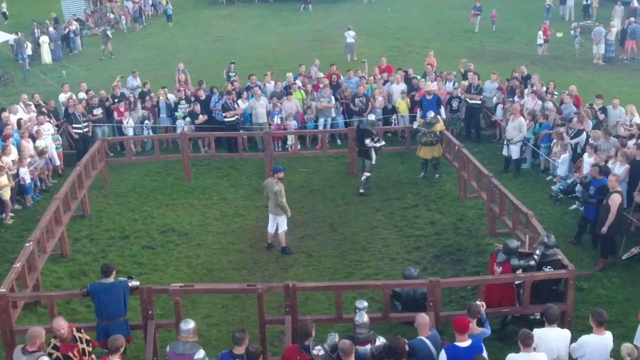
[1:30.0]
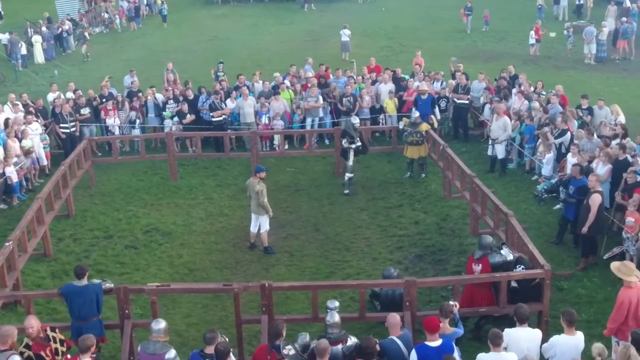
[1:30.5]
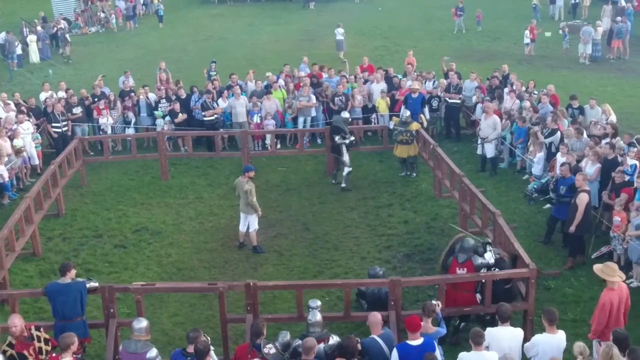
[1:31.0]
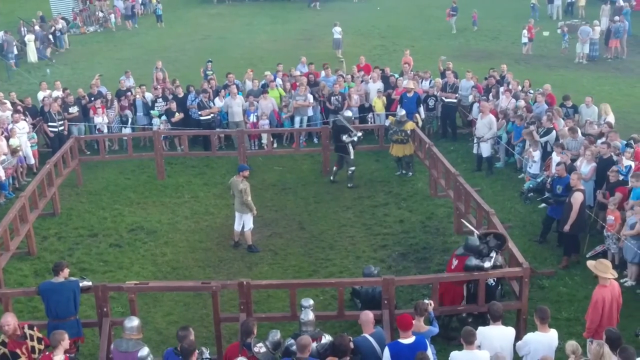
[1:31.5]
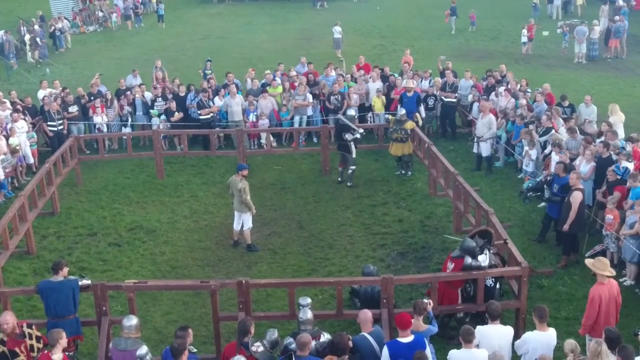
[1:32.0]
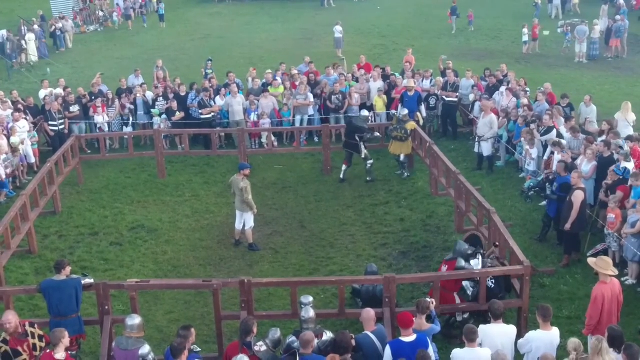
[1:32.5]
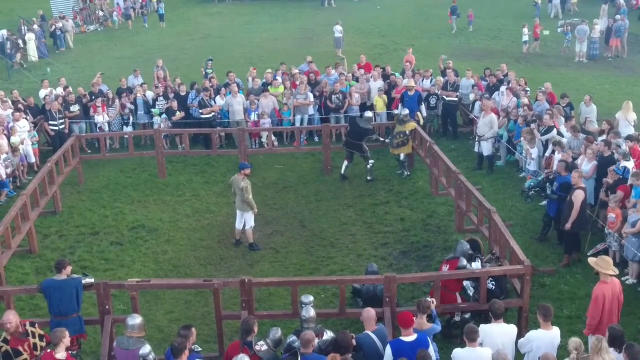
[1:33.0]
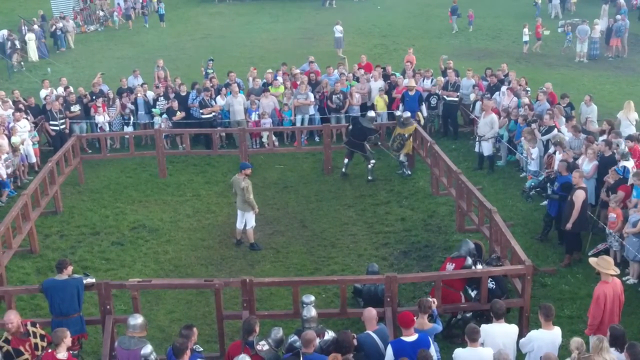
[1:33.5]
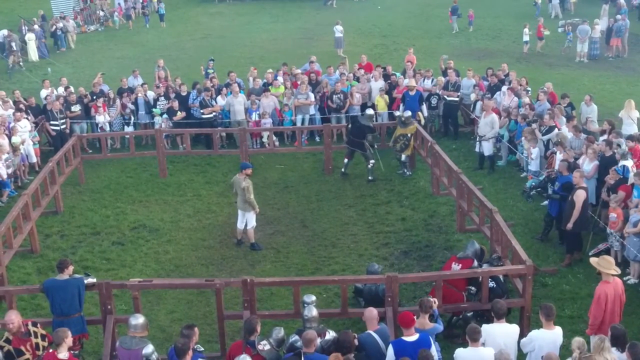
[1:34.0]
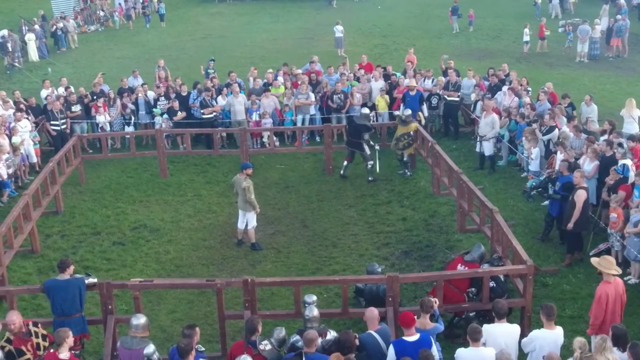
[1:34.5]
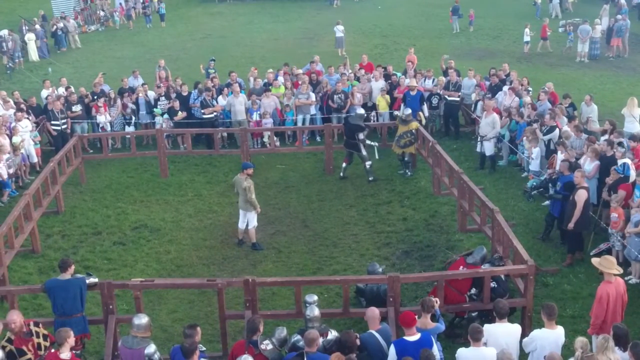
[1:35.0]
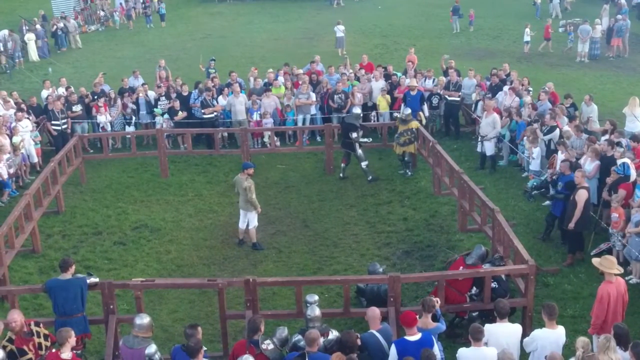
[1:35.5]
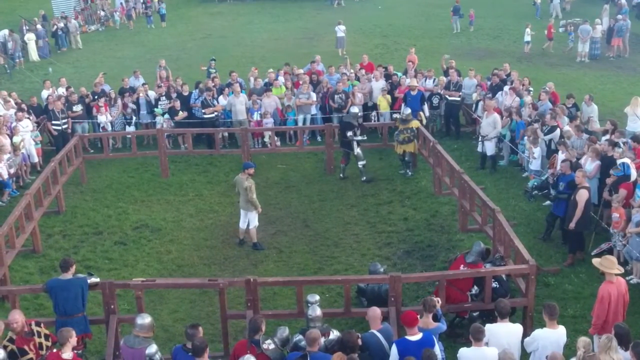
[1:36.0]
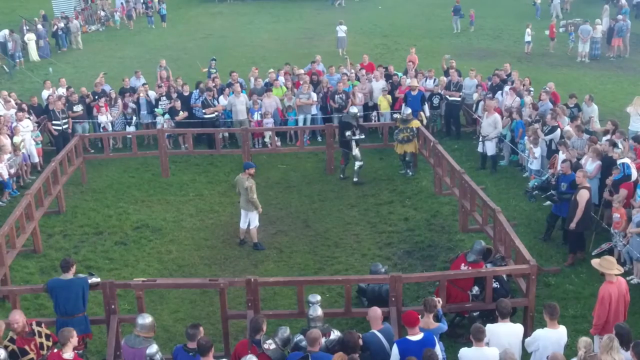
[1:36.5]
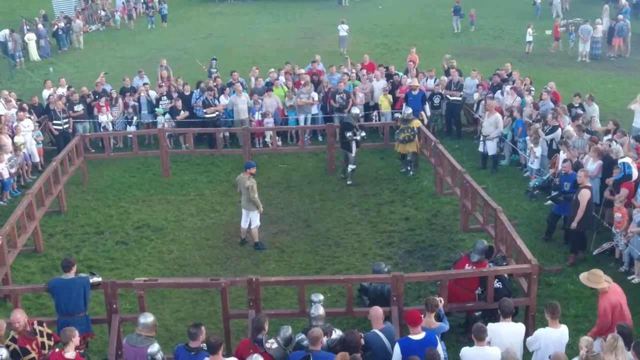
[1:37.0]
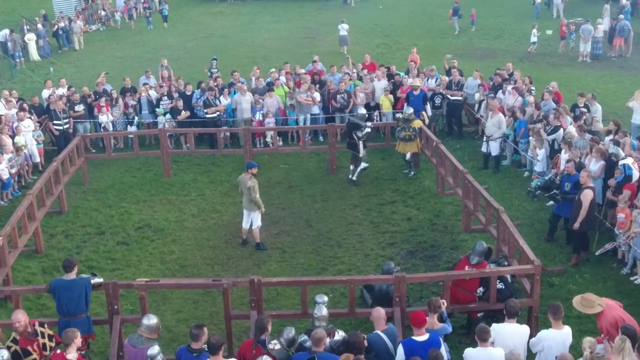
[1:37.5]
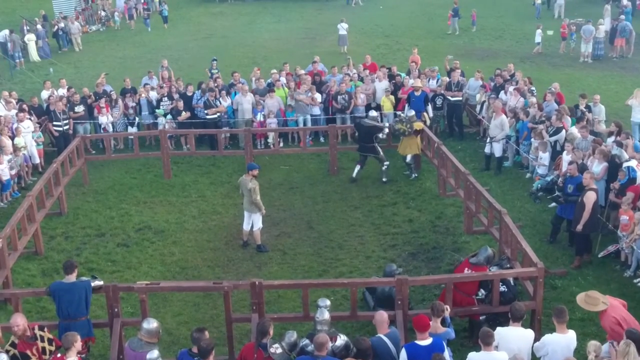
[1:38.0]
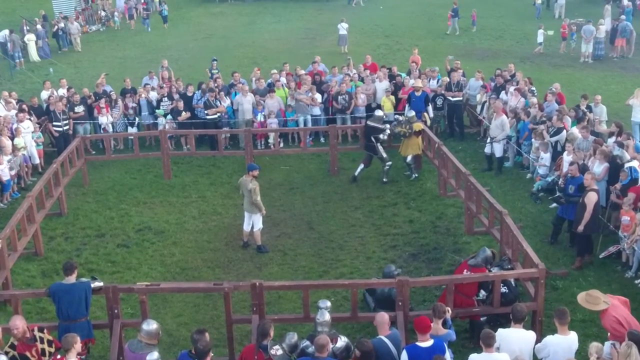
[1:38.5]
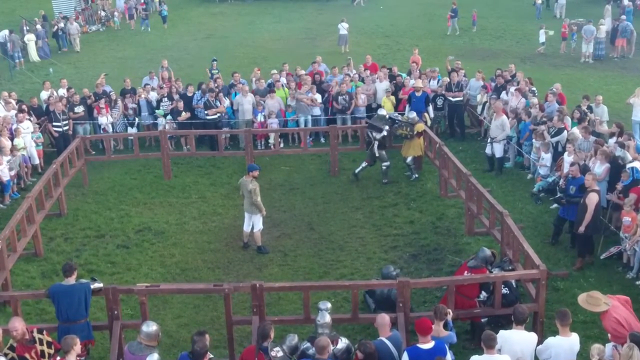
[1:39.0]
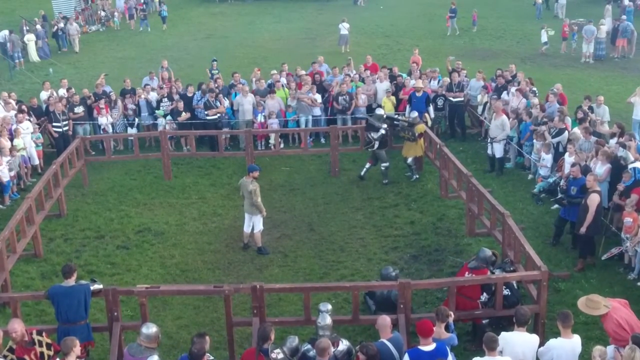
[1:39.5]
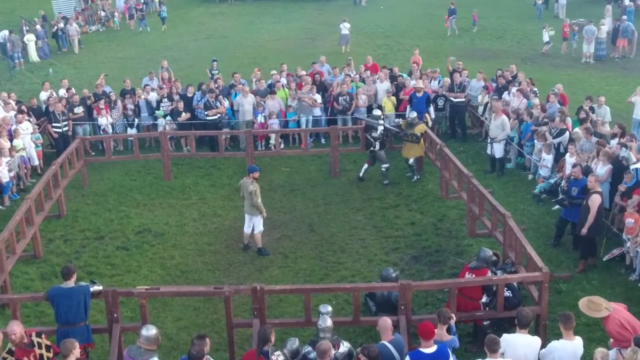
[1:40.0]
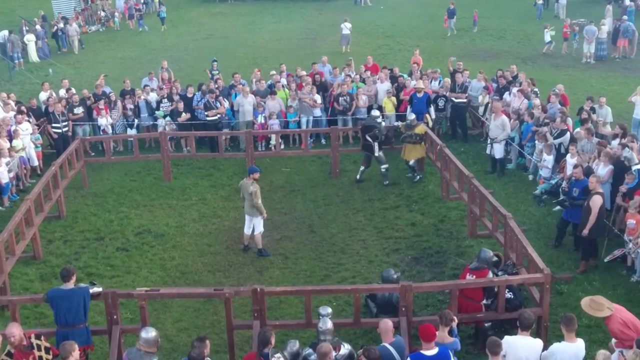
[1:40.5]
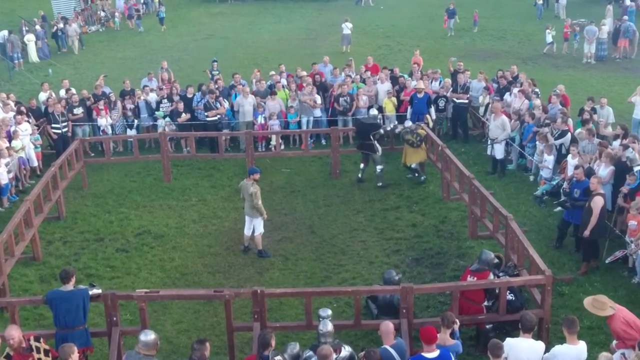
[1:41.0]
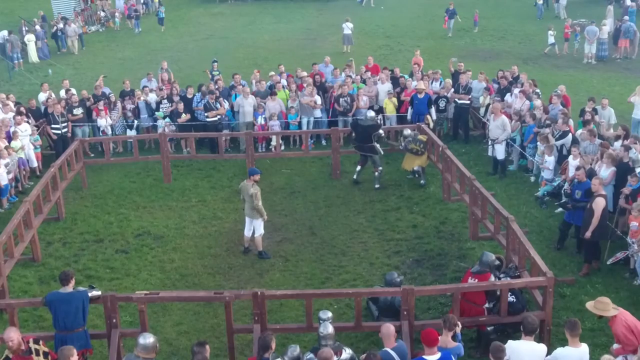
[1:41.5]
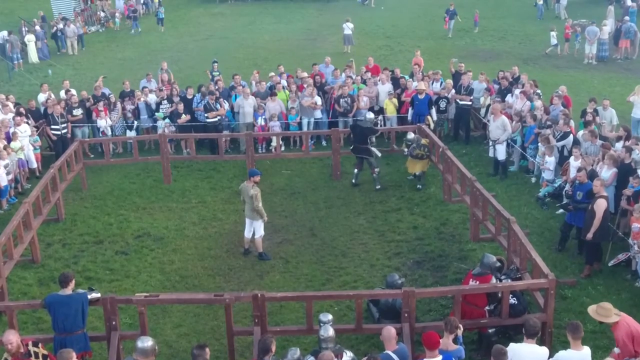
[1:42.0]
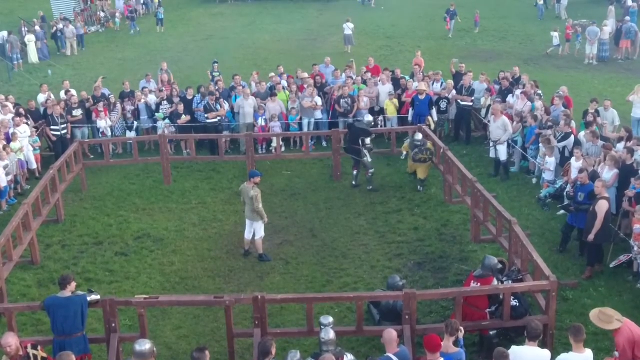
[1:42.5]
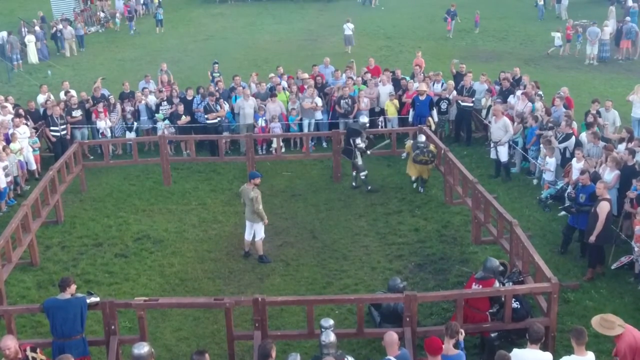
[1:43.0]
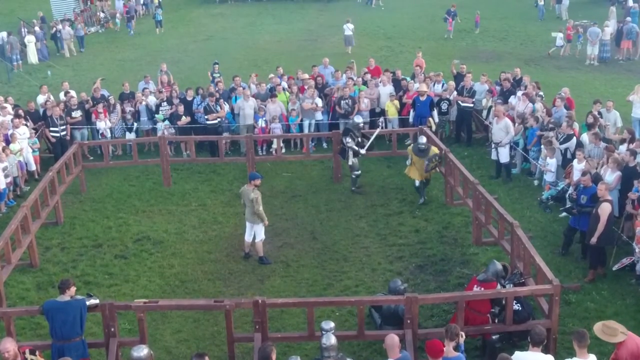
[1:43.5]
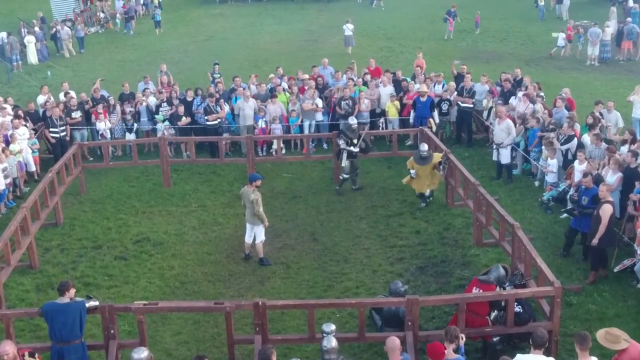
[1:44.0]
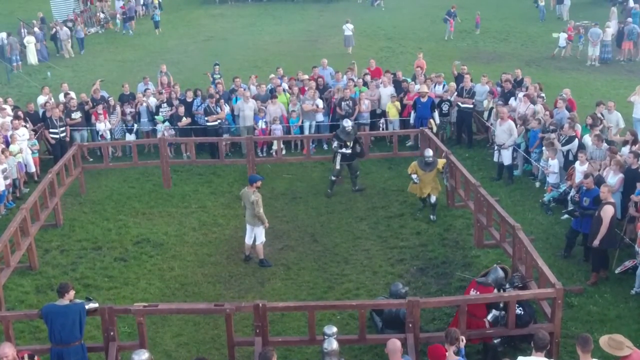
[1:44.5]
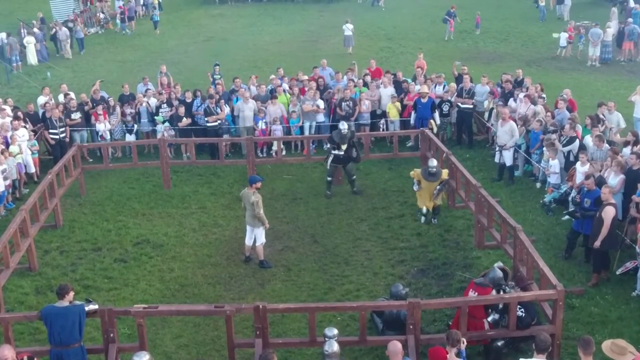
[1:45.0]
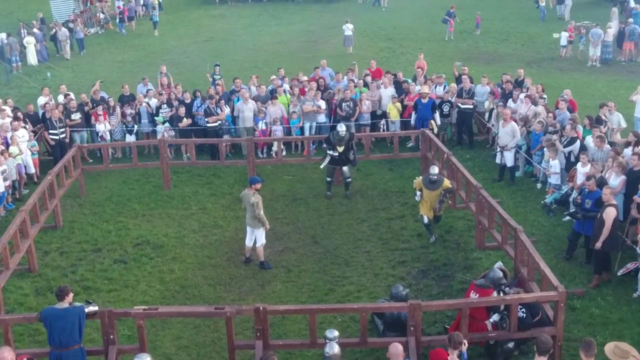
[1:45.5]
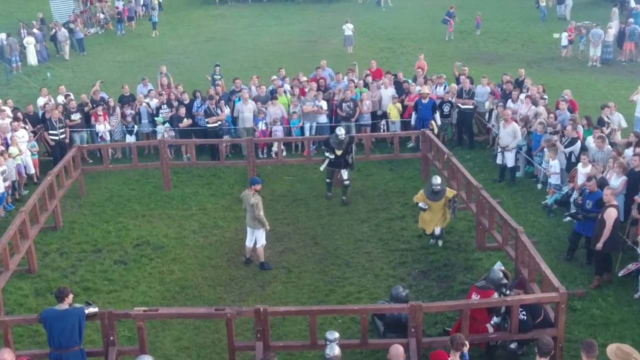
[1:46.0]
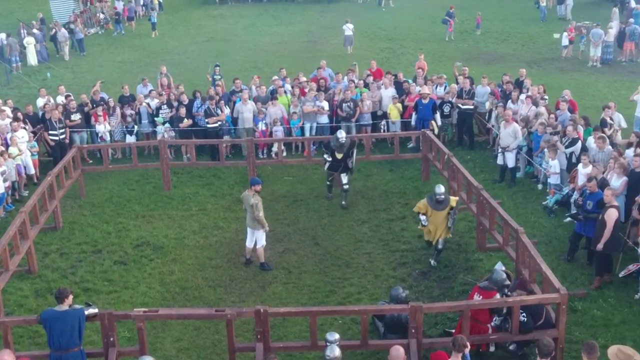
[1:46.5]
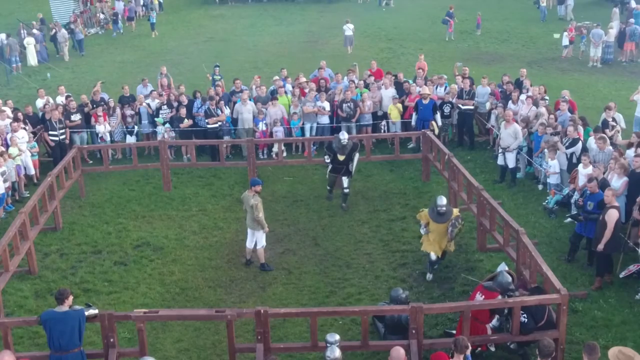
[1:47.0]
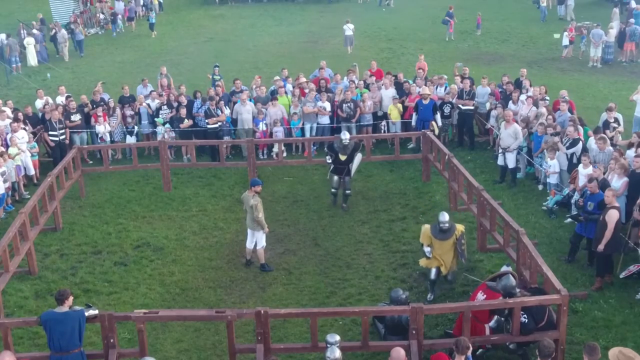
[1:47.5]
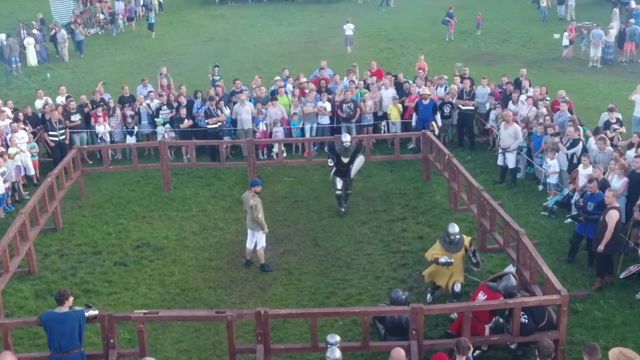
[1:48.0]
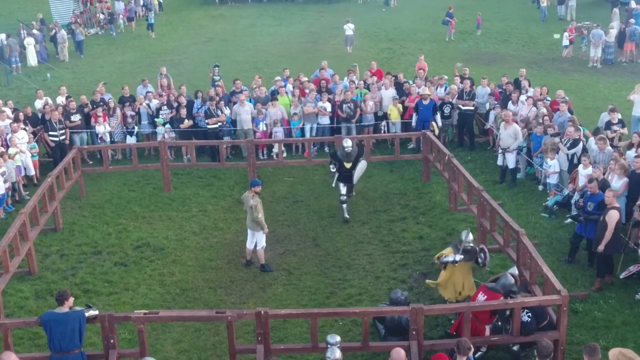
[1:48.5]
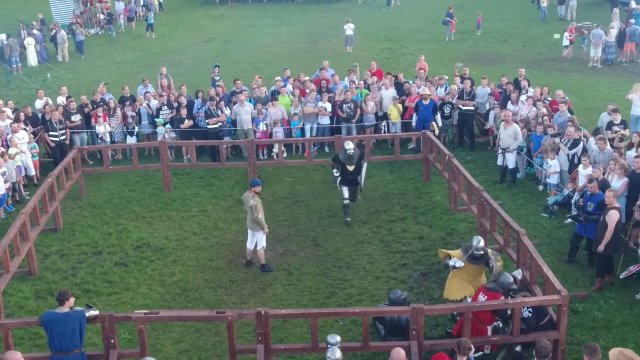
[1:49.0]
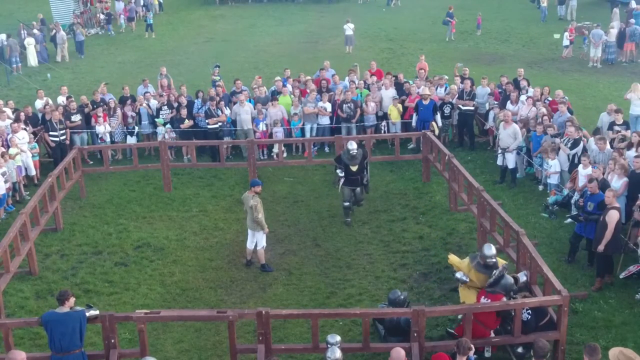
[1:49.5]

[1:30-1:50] The fighters continue struggling against each other. The knight in the red cloak suddenly raises both of his arms, including his shield arm, and appears to grab the knight in blue across the head. He begins pushing him down and seems to push him against the ground. Meanwhile, the soldier in yellow looks over and begins rushing forward. The soldier in black remains still and lets him disengage, then begins slowly following along. When the fighter in yellow gets there, he appears to crush into the knight in red with his shield, bashing him. In the background, loose groups of people stand about in the field, including what appears to be a person and a child. To the left is a denser group of people, and to the right is another, slightly sparser group. As the scene ends, the fighter in black is roughly in the center, and the others are in the bottom right corner.